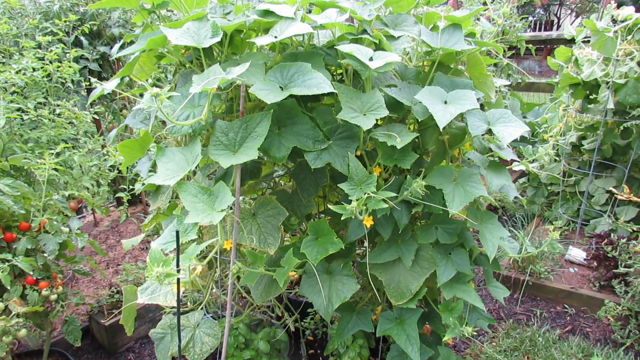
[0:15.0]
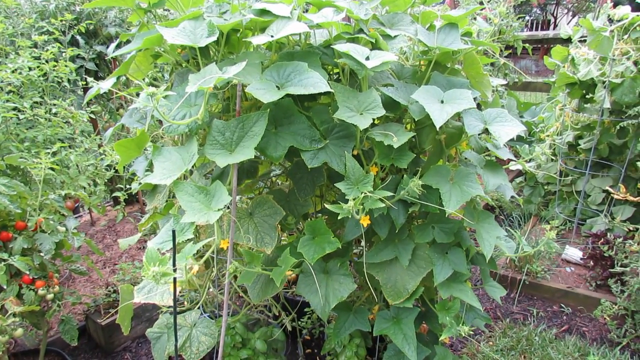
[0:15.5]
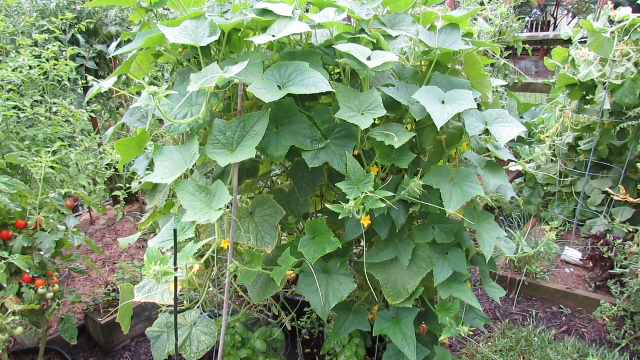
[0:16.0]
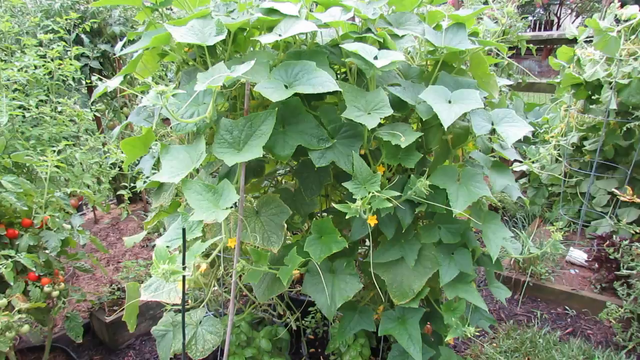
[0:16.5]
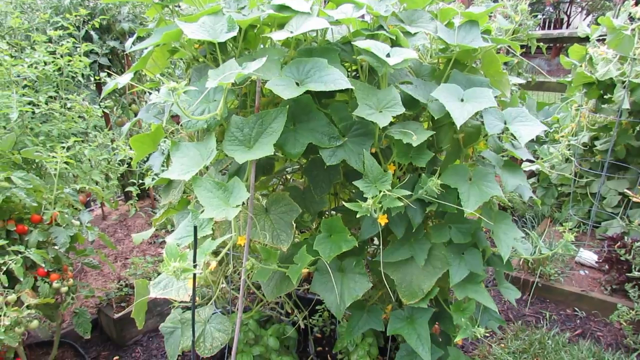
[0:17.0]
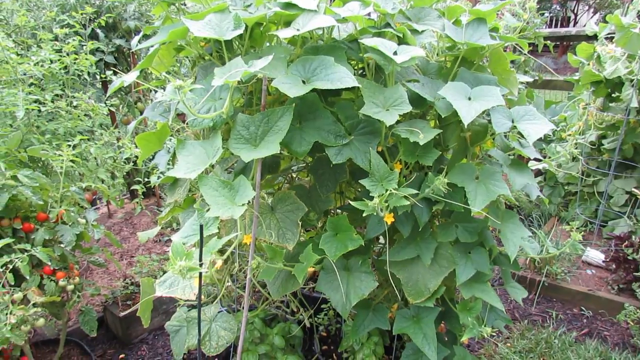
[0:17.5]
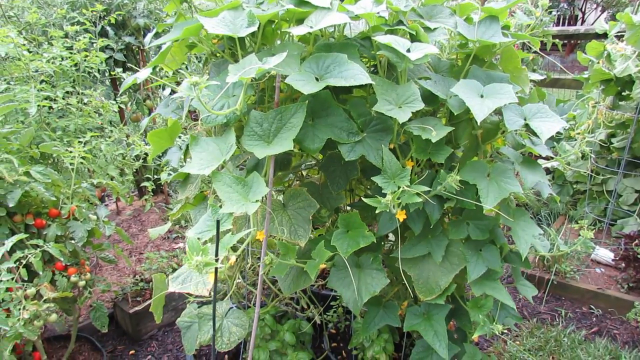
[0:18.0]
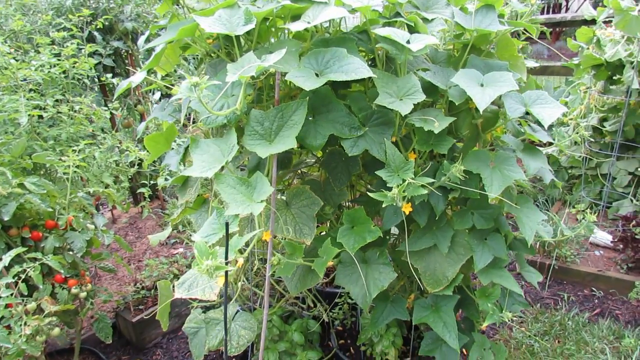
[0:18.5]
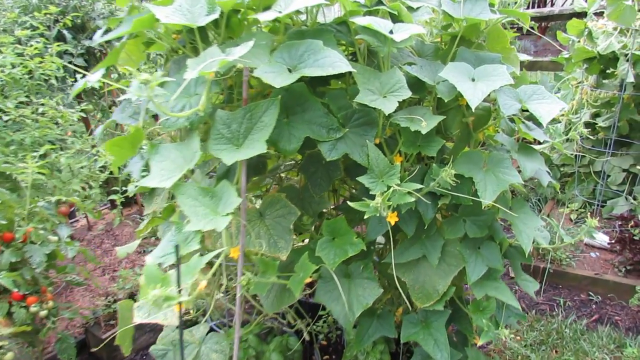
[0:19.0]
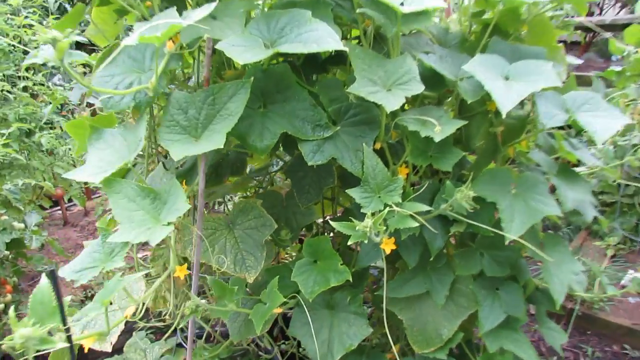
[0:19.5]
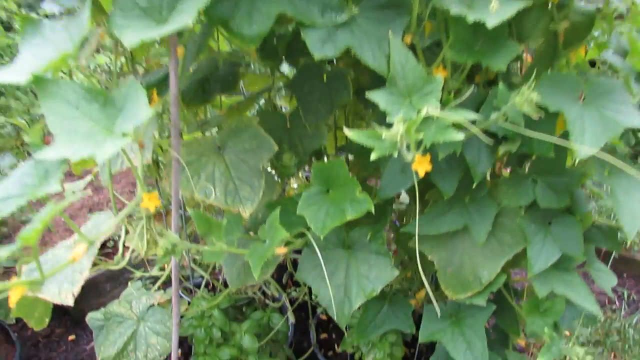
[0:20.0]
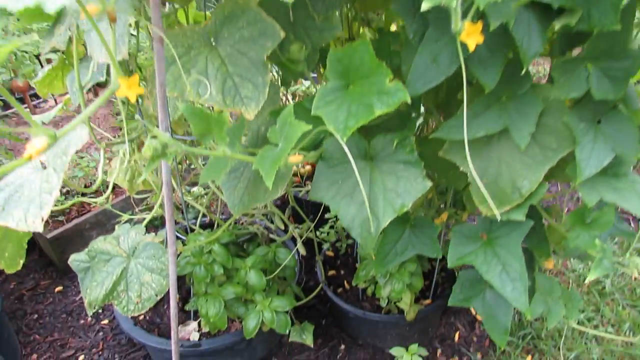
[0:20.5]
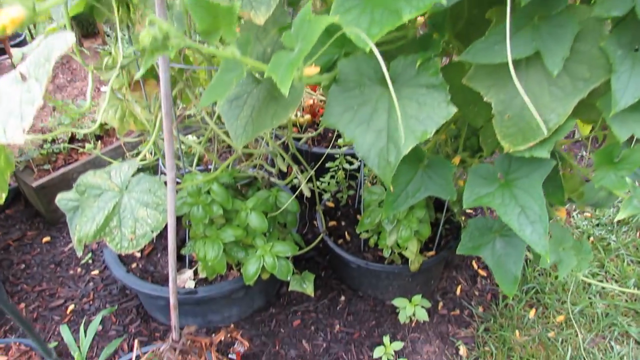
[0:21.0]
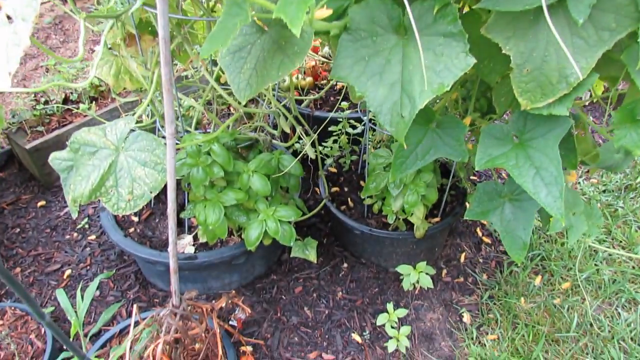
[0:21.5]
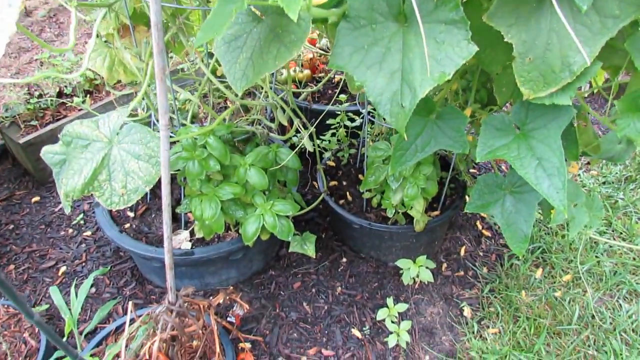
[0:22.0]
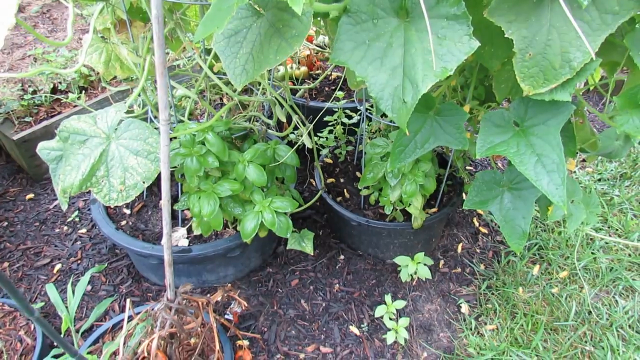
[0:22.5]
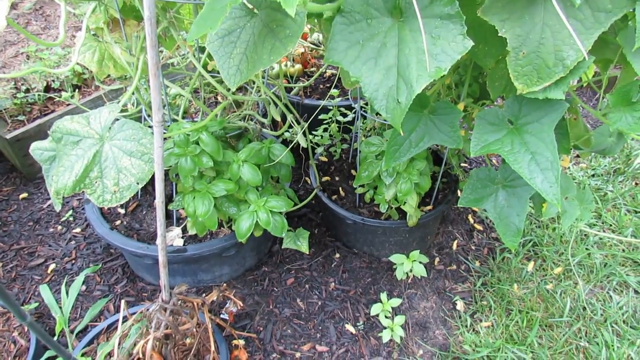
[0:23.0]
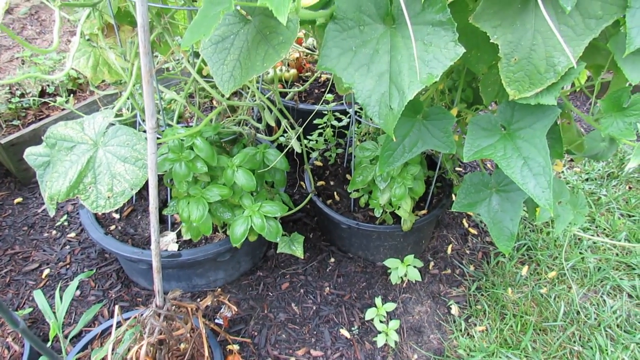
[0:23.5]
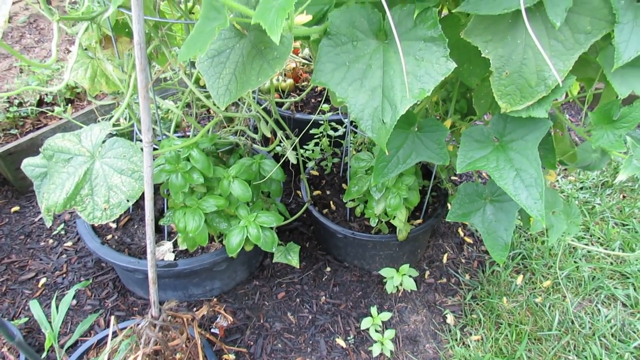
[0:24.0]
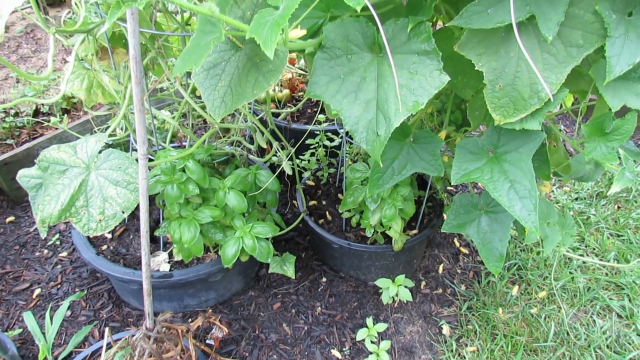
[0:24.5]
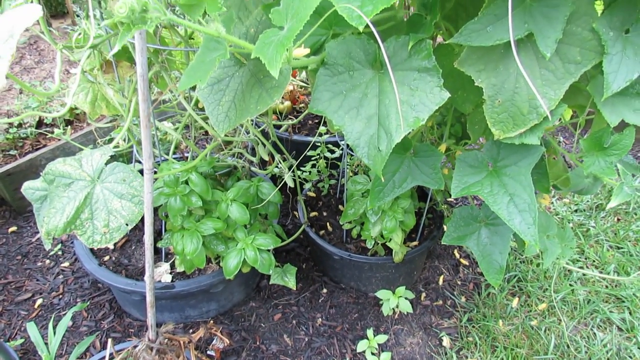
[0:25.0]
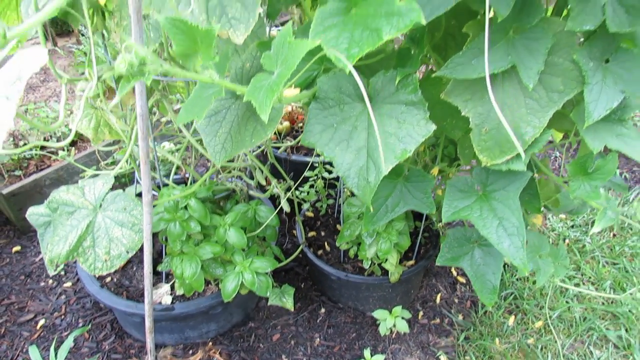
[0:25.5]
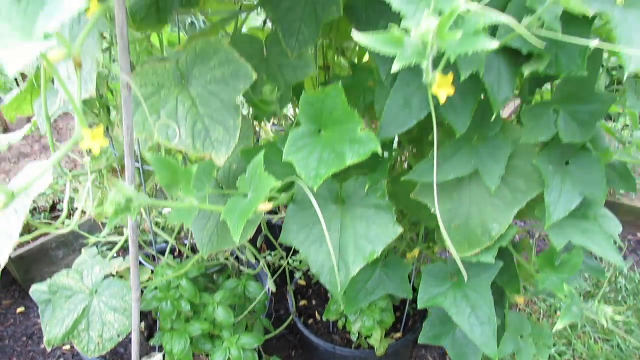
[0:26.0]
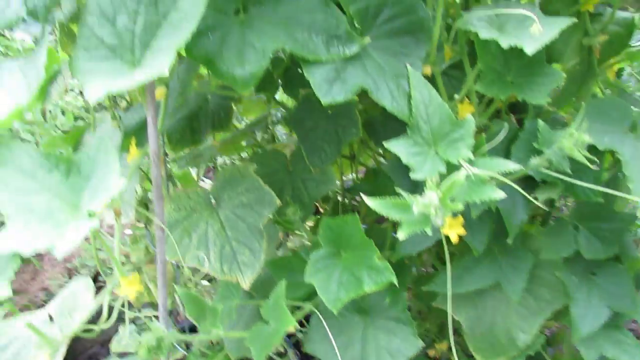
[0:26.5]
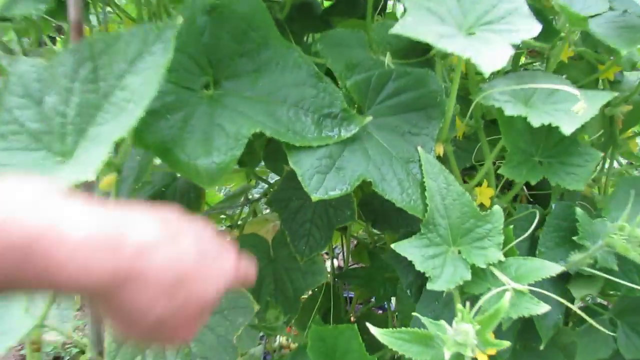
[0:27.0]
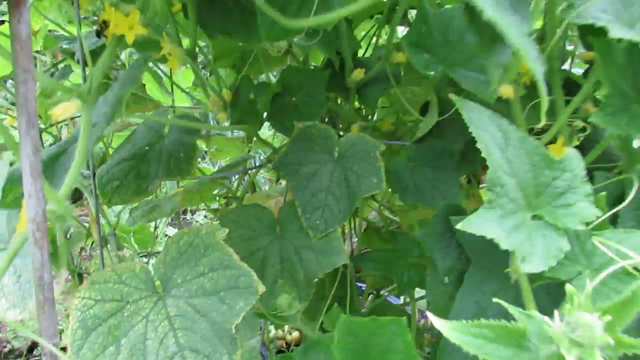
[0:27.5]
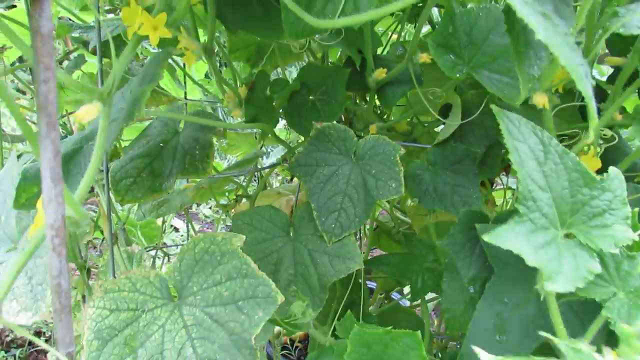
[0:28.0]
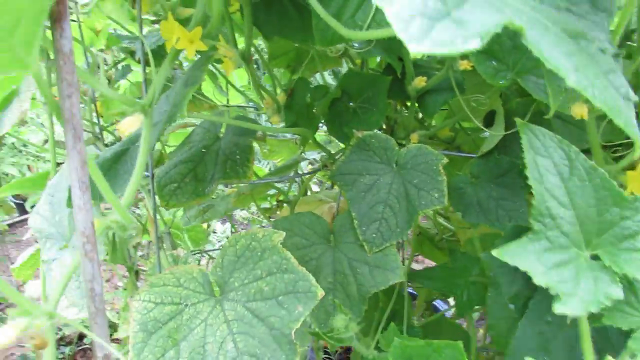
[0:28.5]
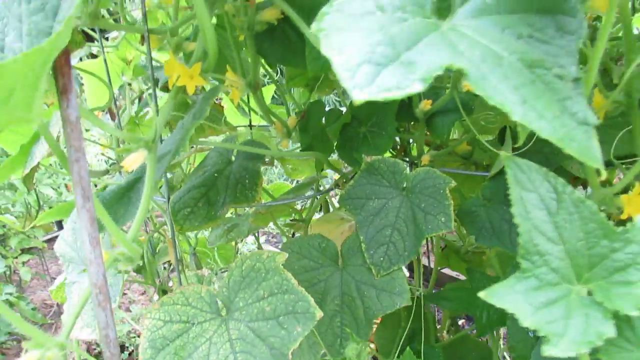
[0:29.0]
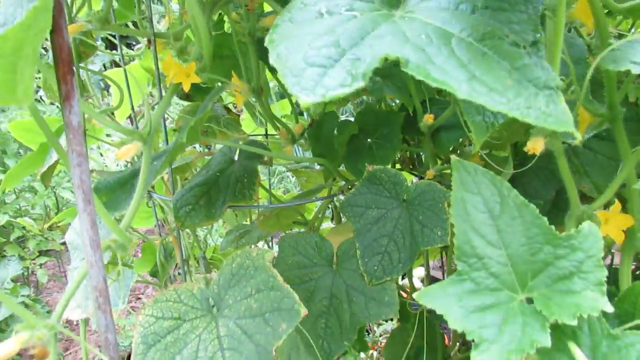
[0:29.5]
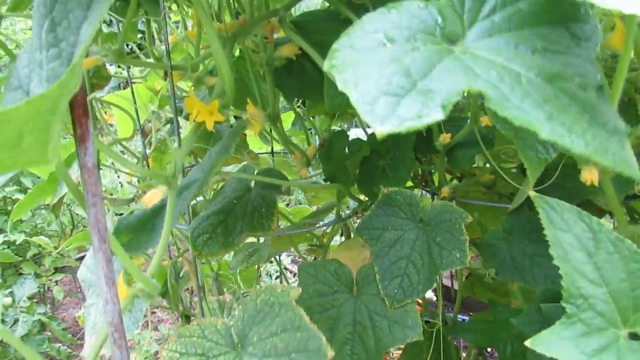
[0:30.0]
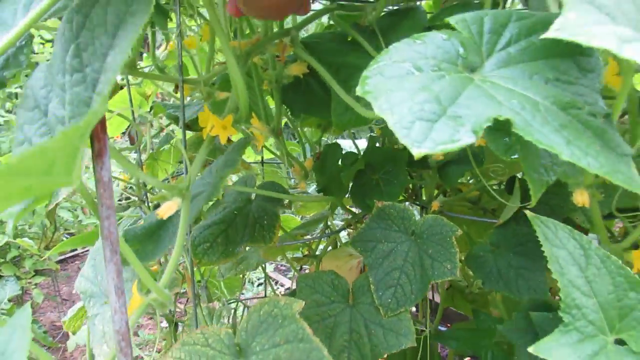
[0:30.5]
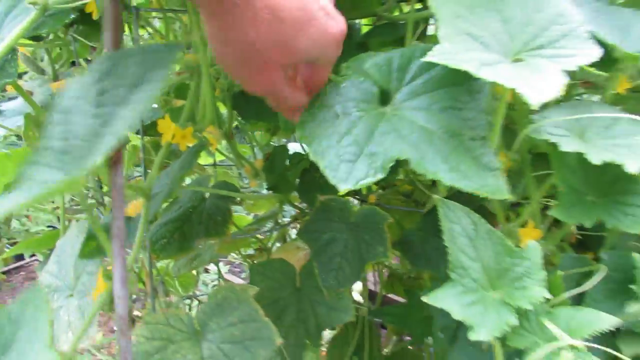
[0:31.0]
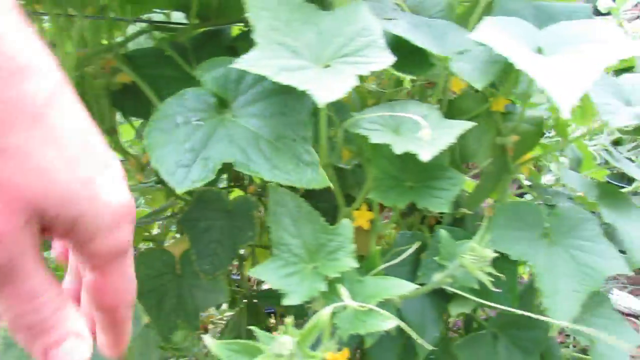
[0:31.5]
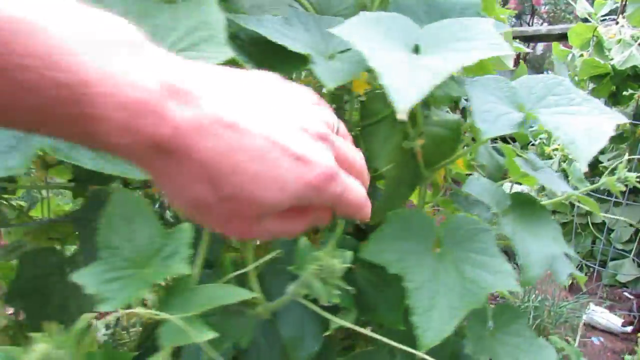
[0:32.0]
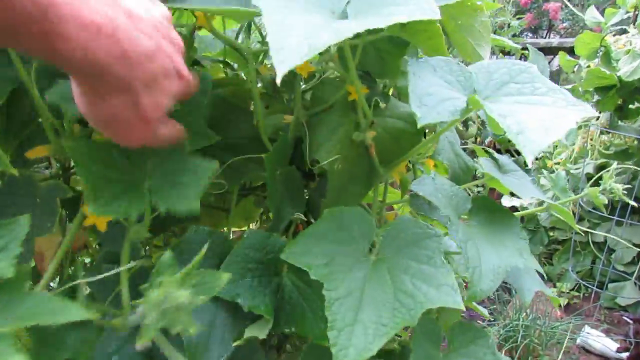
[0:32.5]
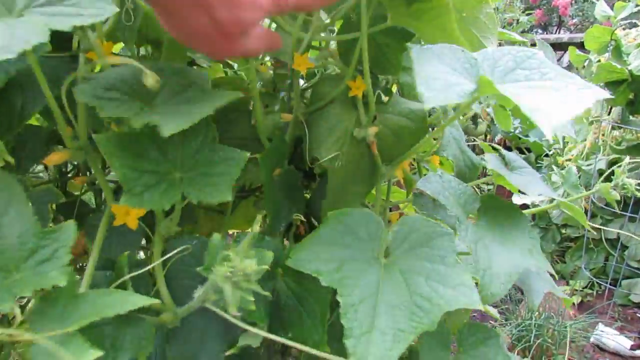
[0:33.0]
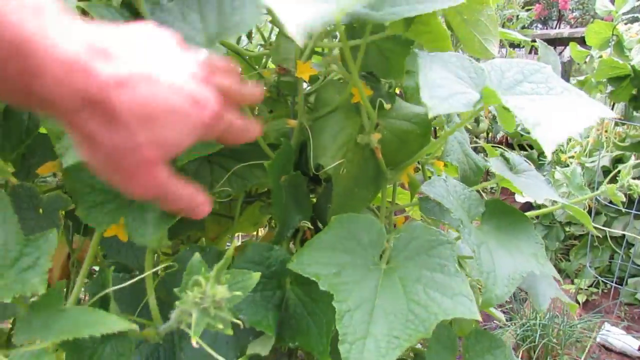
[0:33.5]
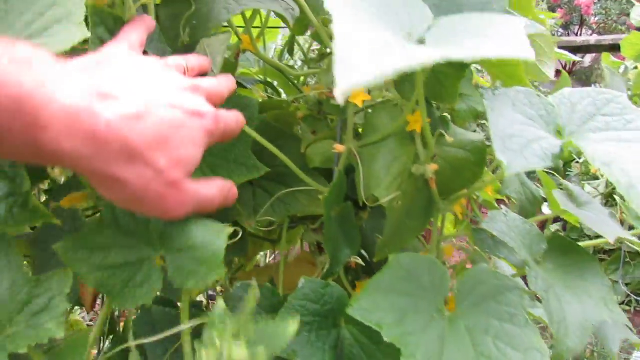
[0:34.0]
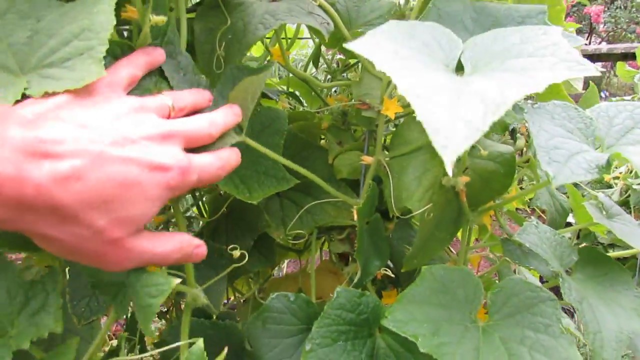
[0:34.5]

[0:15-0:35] The shot begins with the whole plant in the same garden, with the plant bearing red tomatoes or some other vegetable or fruit on the left and an assortment of green plants along the back, then centers on the main plant in the middle, a pretty tall and full bush covered in green leaves, with small yellow flowers in bloom and some visible stems. The camera pans into a close-up of the bottom, showing three black pots on the floor with dirt inside them, with leaves and other plants growing from that soil. The camera then pans up, and a human hand, apparently a left hand, moves the leaves aside so the inside of the plant can be seen.